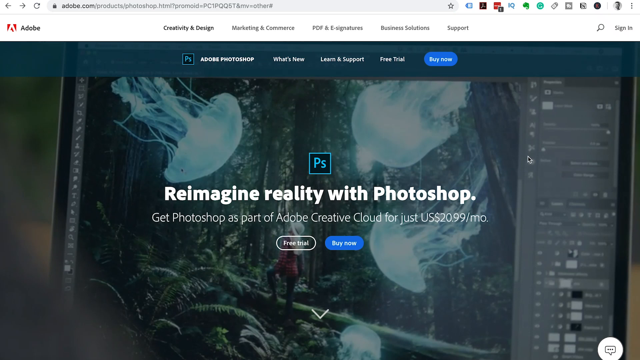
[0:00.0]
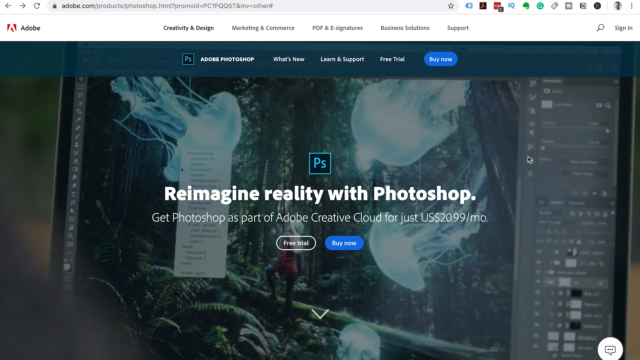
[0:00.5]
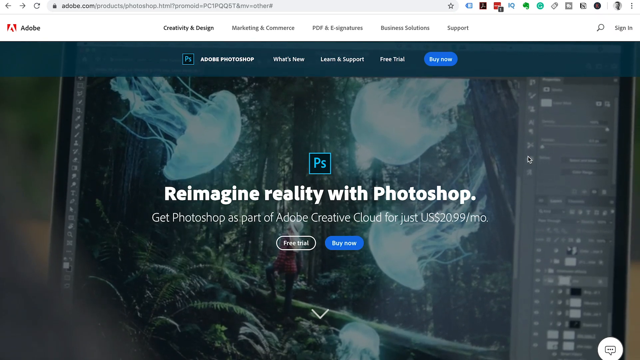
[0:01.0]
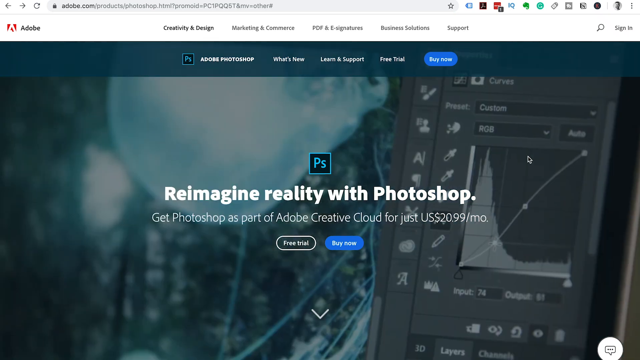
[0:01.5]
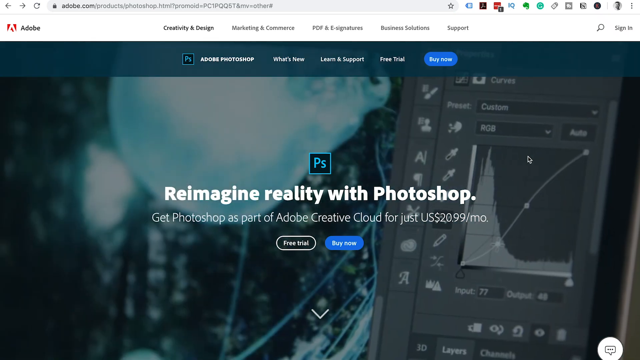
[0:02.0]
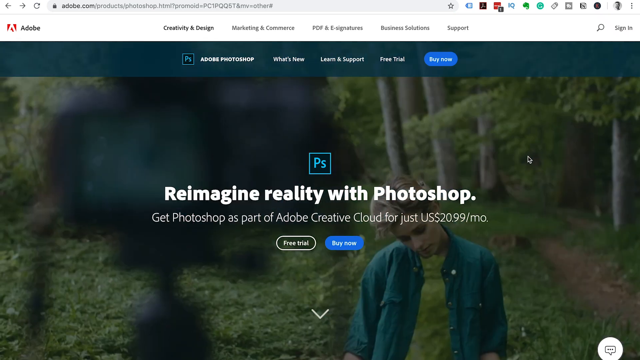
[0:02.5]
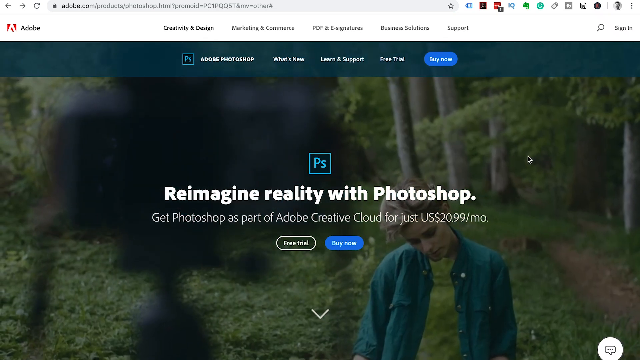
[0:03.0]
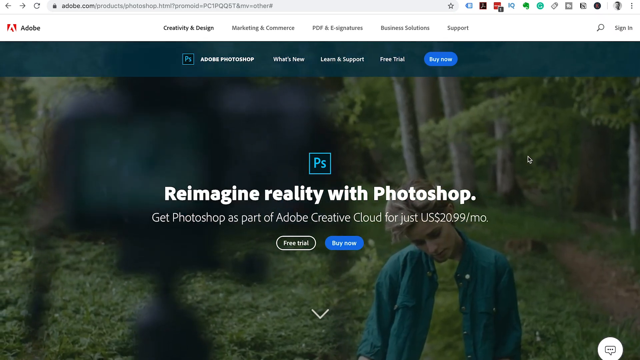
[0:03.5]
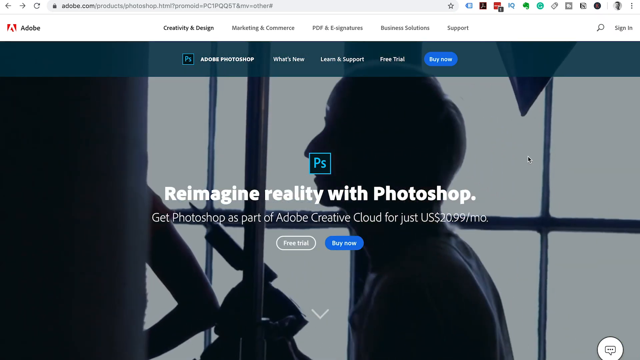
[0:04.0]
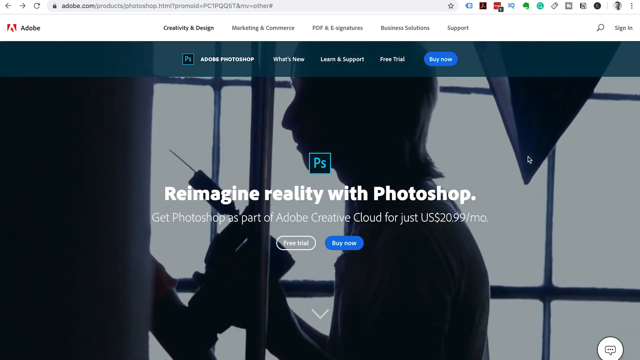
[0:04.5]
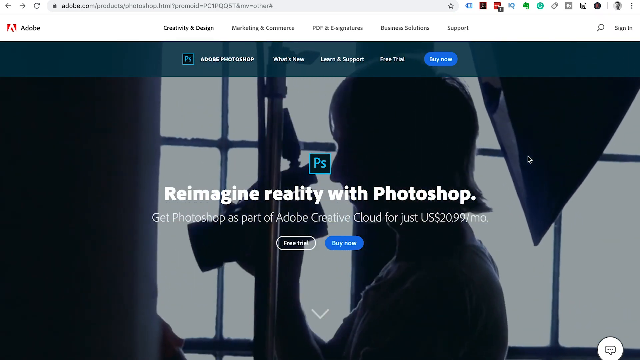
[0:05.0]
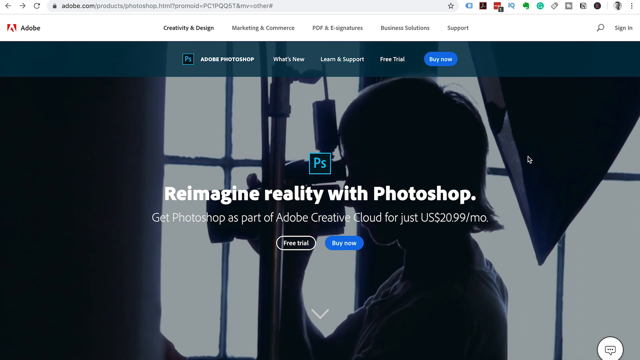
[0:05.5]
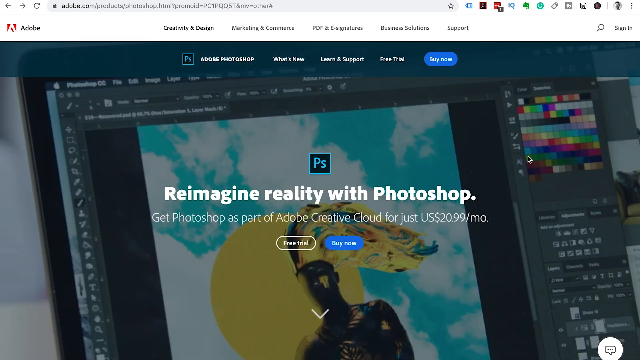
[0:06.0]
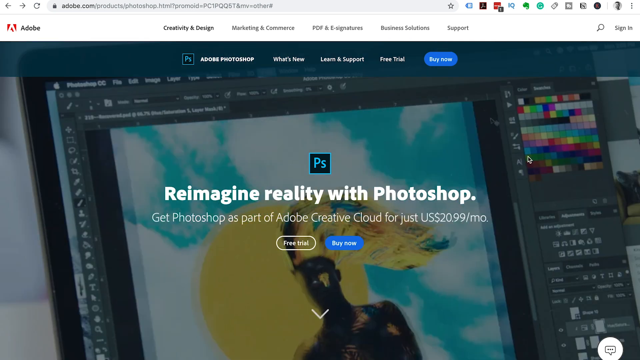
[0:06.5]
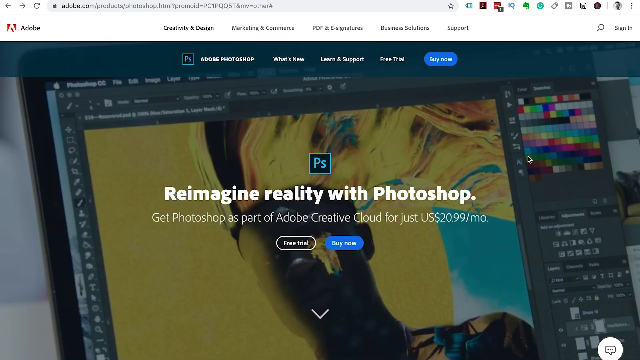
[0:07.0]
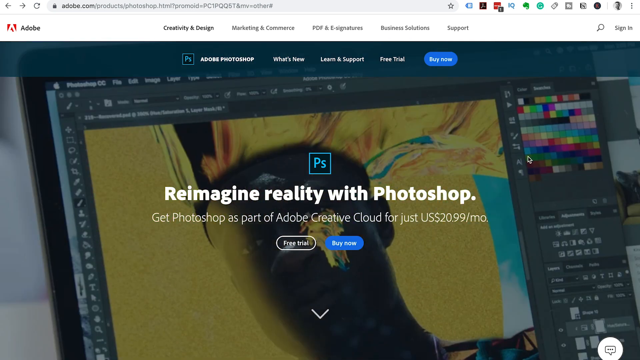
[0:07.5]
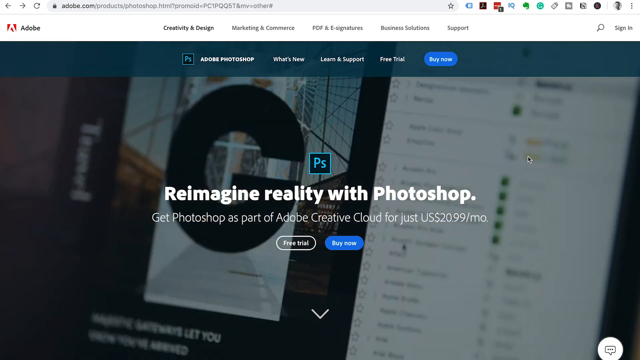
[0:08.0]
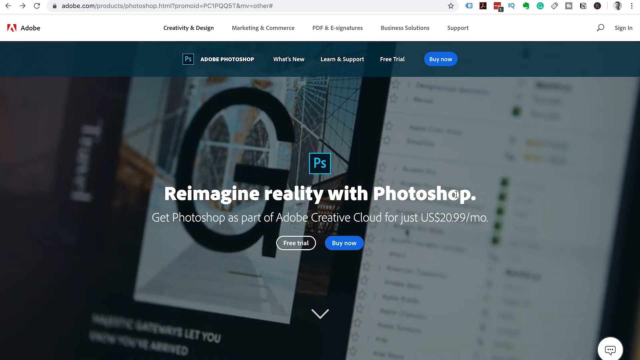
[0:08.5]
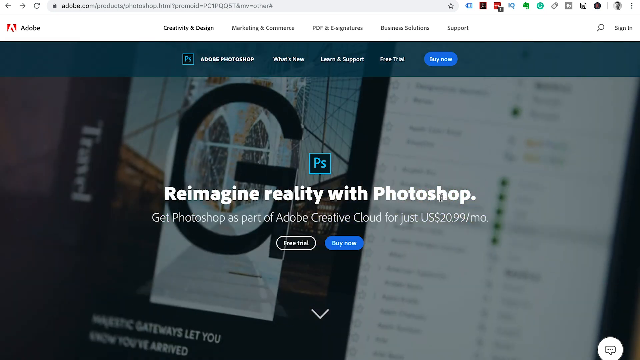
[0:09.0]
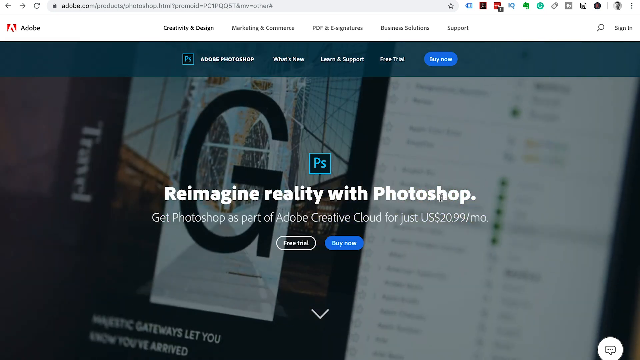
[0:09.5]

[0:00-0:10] A screenshot is shown, not very bright or stark in color but with some variance; it looks kind of dull. A woman in a red shirt looks into a wooded area. Superimposed over everything are what look sort of like jellyfish: a couple of large ones at the top and one midway to the right. Text is overlaid on the screen of a computer showing a photograph. It reads "re-imagine reality with Photoshop," and below that, in smaller text, "get Photoshop as part of Adobe Creative Cloud for just US $20.99 a month." Underneath and to the left is a button that seems to have the words "free trial" on it. To its right is a brighter, more inviting blue button, kind of oval in shape, that says "buy now."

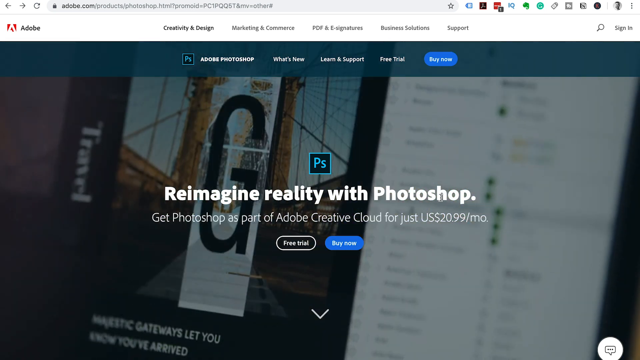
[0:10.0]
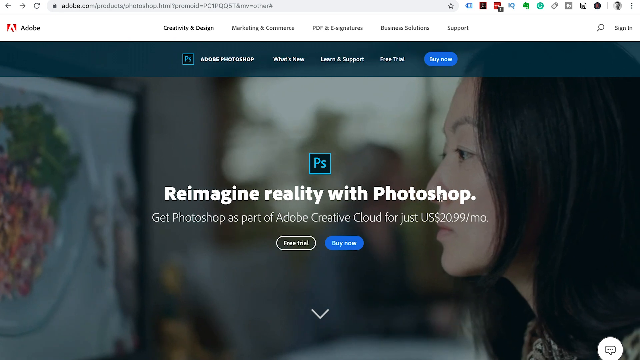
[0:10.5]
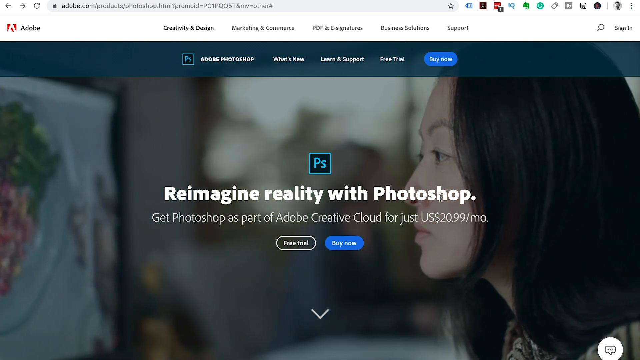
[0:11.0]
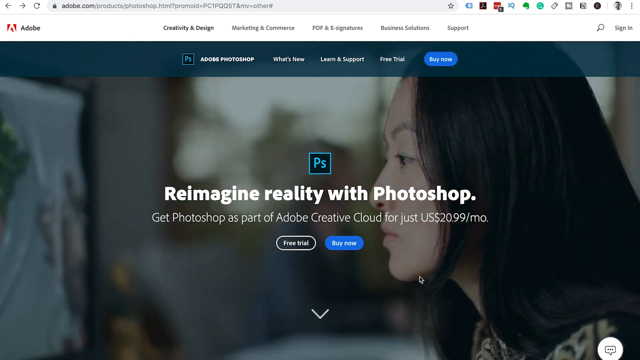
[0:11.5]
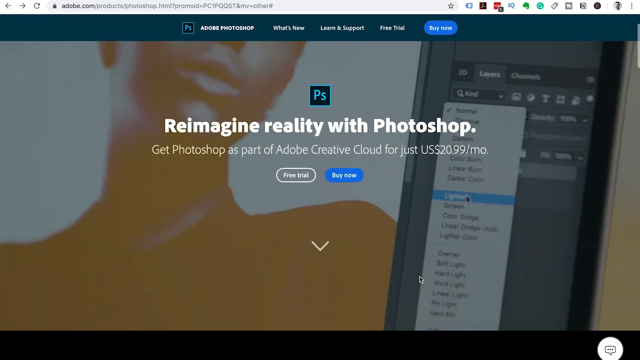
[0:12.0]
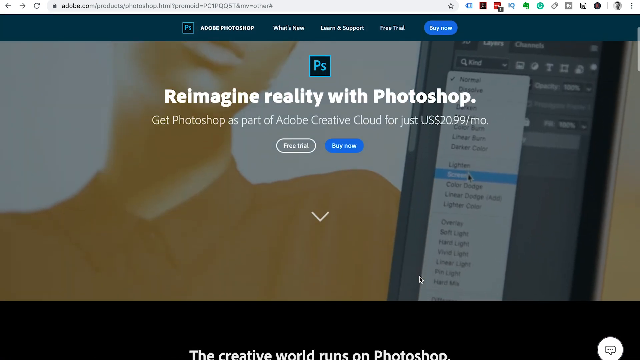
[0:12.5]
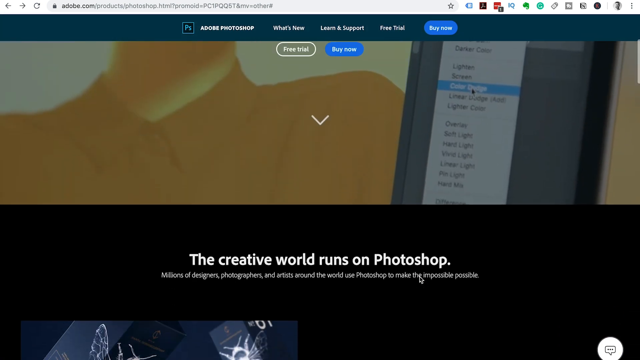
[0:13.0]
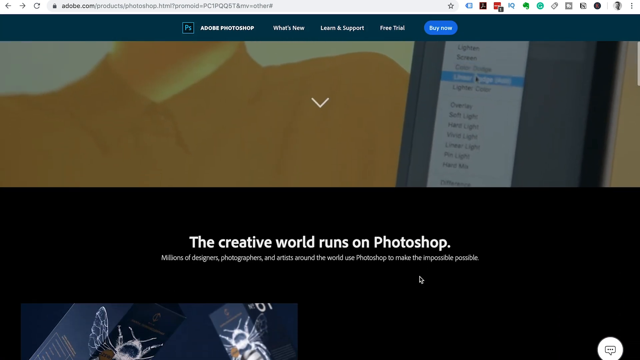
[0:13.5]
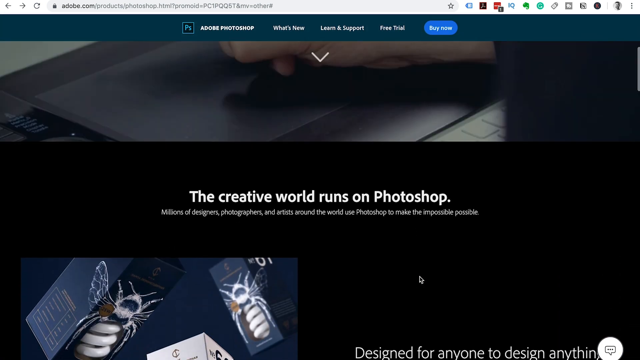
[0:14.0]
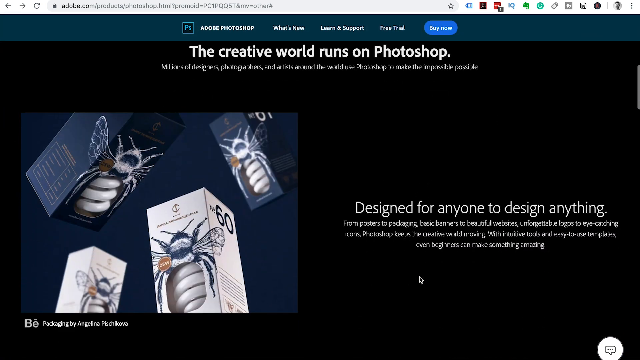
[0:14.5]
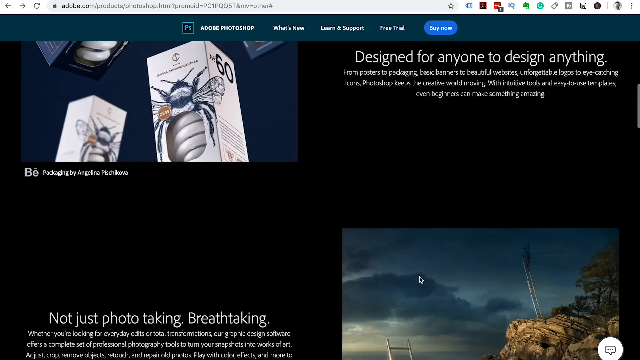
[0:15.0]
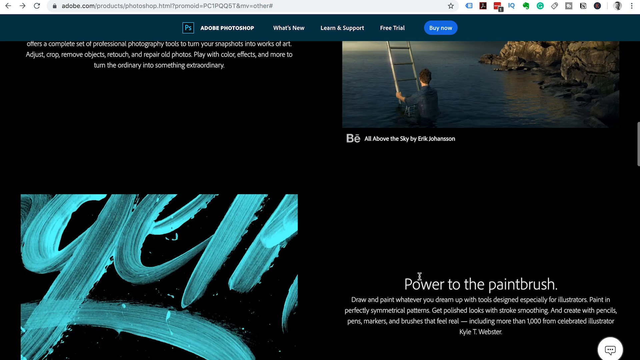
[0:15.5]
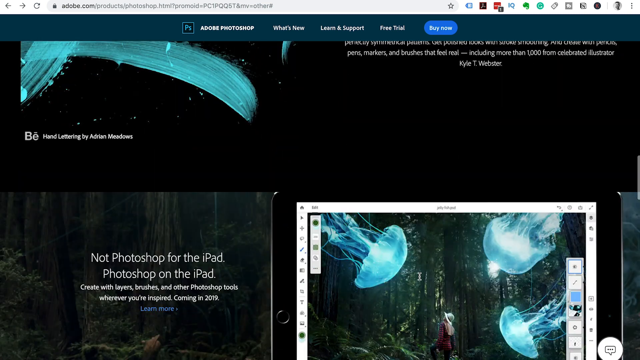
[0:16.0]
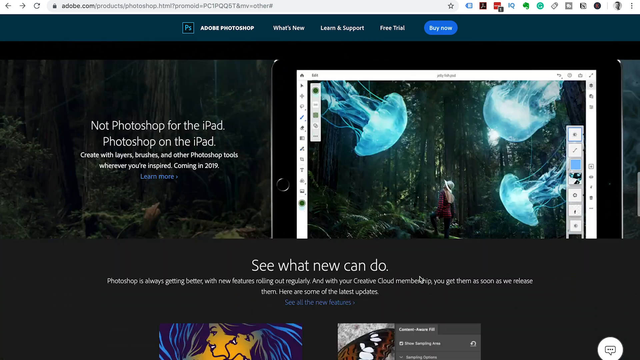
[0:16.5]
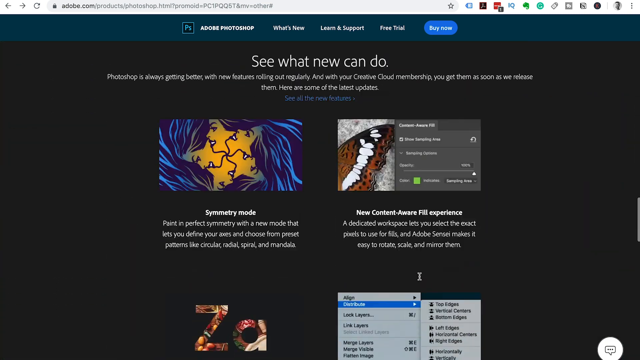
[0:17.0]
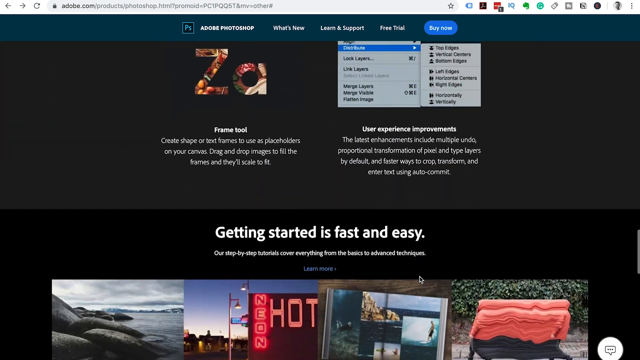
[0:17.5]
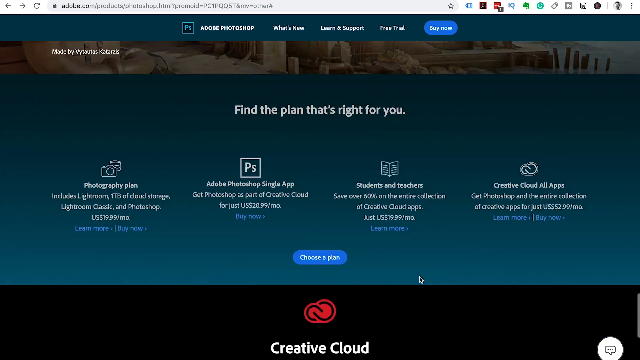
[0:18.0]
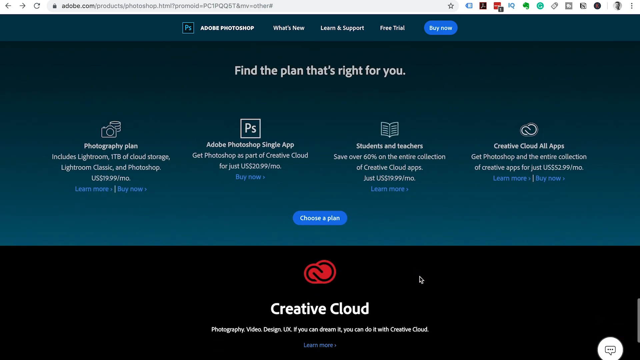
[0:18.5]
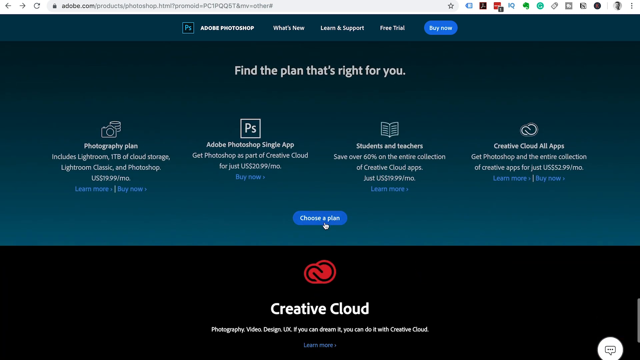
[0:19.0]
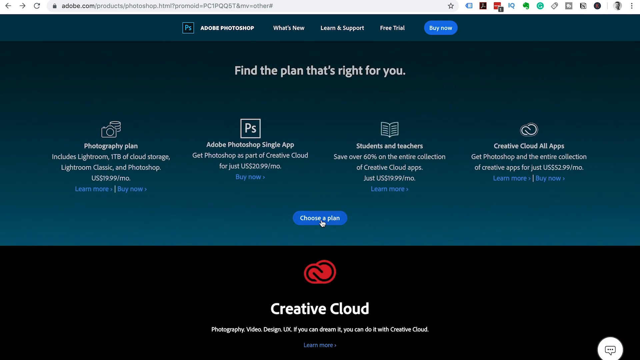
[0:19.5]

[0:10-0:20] The woman stares at kind of a screen. She is shown in profile on the right, looking at something on the viewer's left. A computer appears with the same superimposed message over the front of the image, reading "reimagined reality with Photoshop" along with the $20.99-a-month Adobe Creative Cloud pricing line. A sepia-toned man is shown. Someone then scrolls down, revealing rectangular cubes that seem like boxes, with what looks like bees or some sort of flying insect painted on them. To the right is text that reads: "design for anyone to design anything from posters to packaging, basic banners to beautiful websites, unforgettable logos to eye-catching icons." It continues "Photoshop keeps the creative world moving with" and ends "Even beginners can make something amazing."